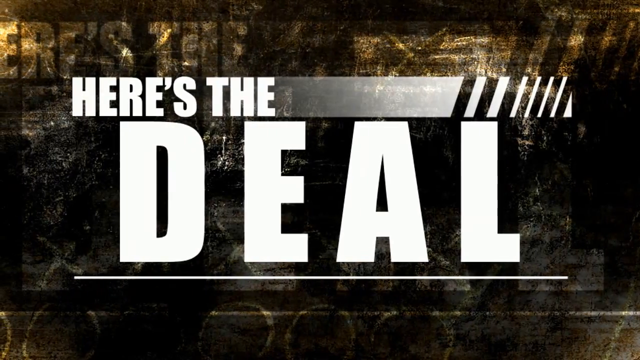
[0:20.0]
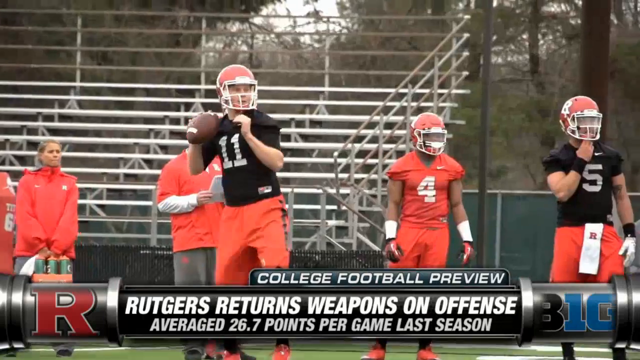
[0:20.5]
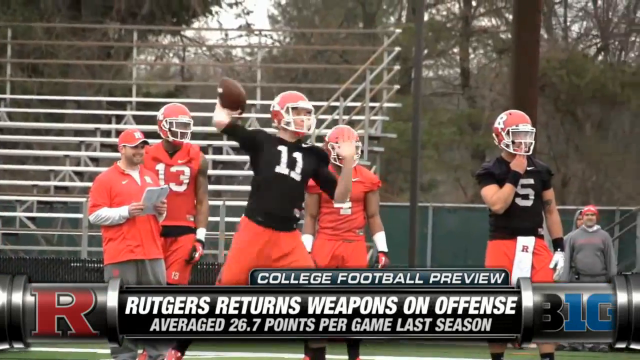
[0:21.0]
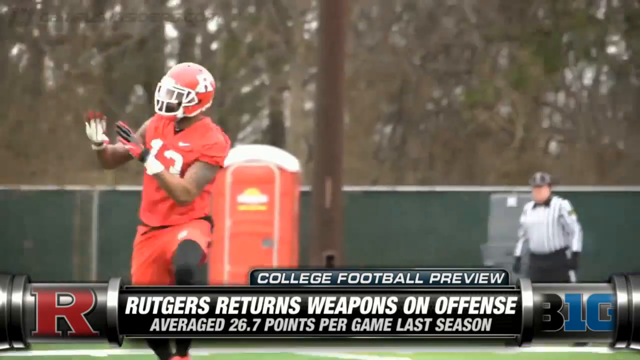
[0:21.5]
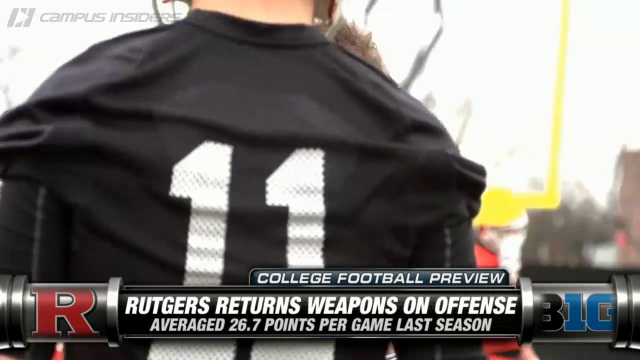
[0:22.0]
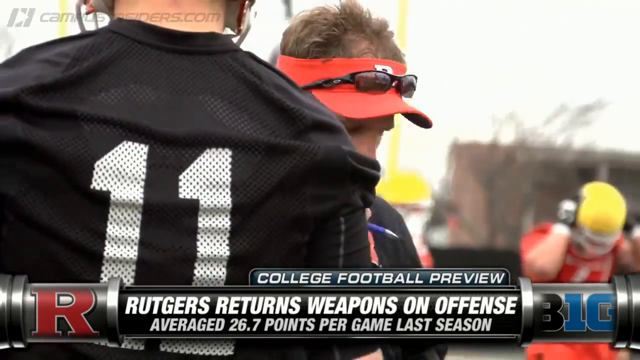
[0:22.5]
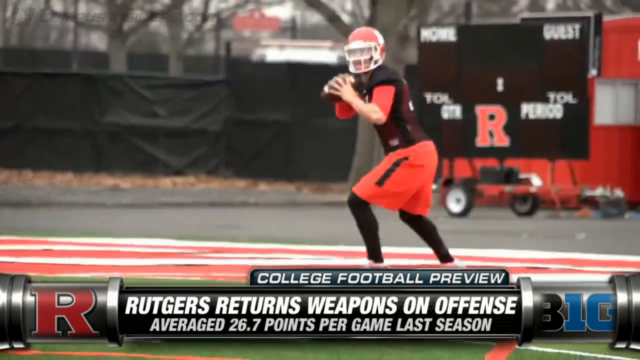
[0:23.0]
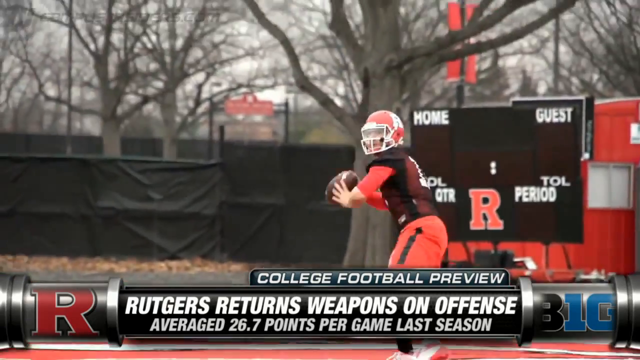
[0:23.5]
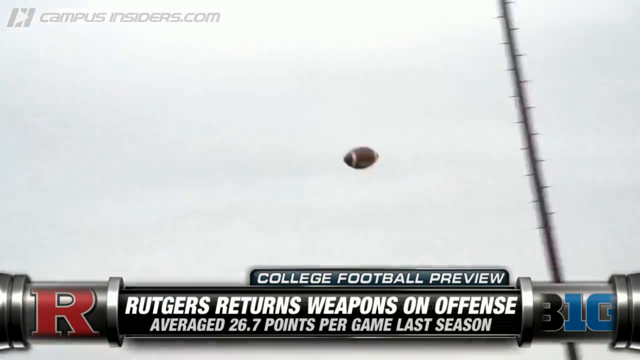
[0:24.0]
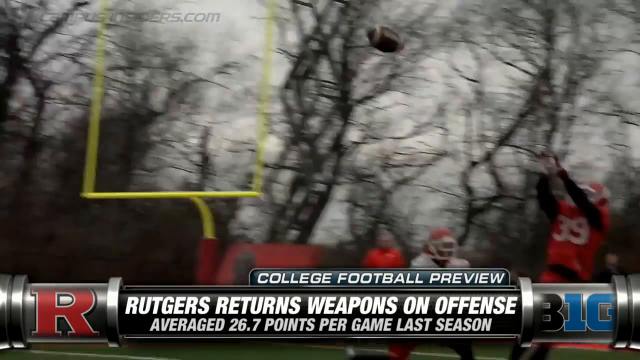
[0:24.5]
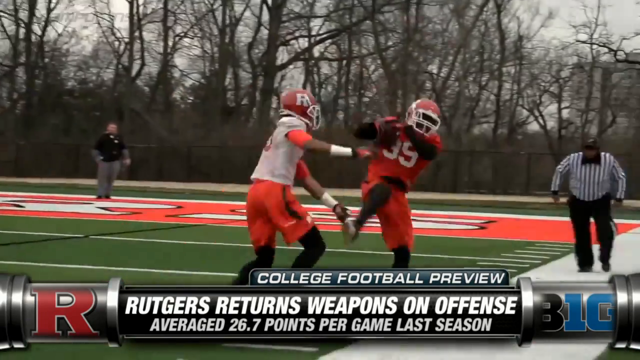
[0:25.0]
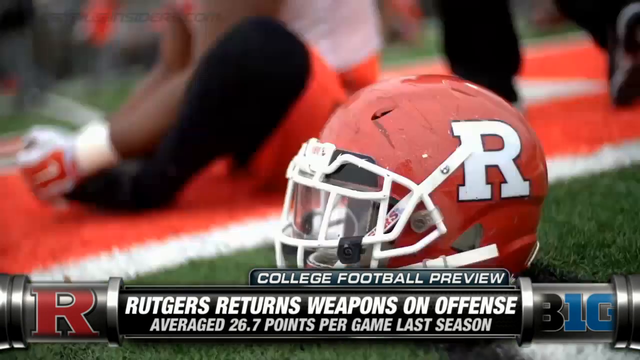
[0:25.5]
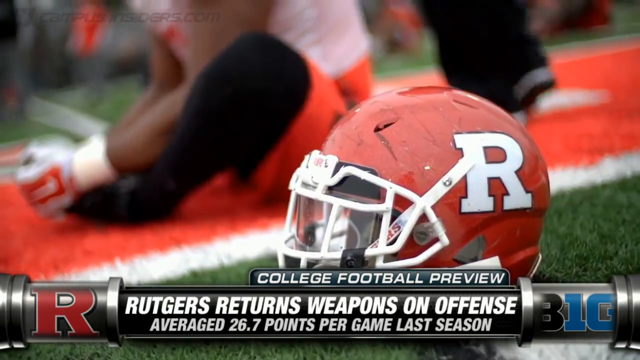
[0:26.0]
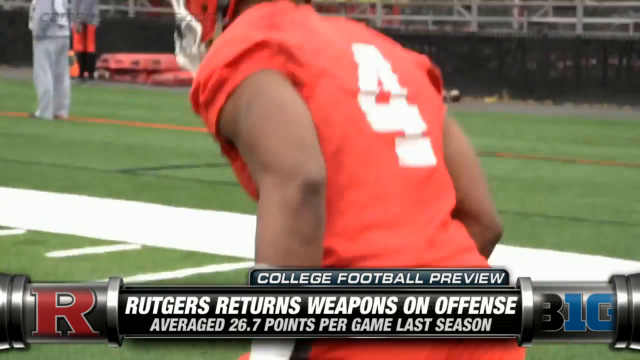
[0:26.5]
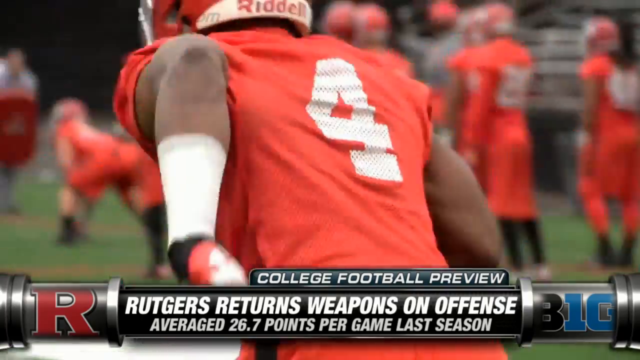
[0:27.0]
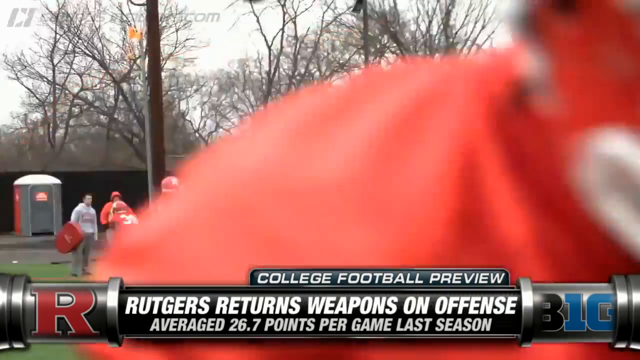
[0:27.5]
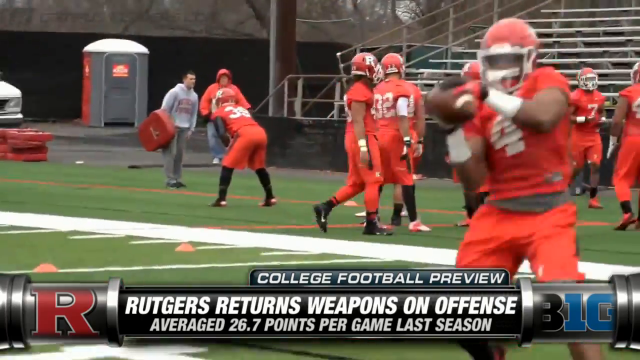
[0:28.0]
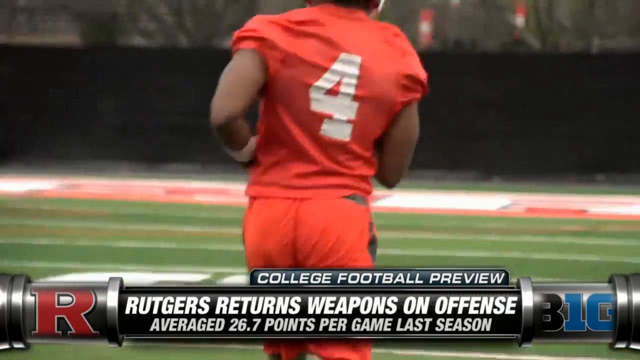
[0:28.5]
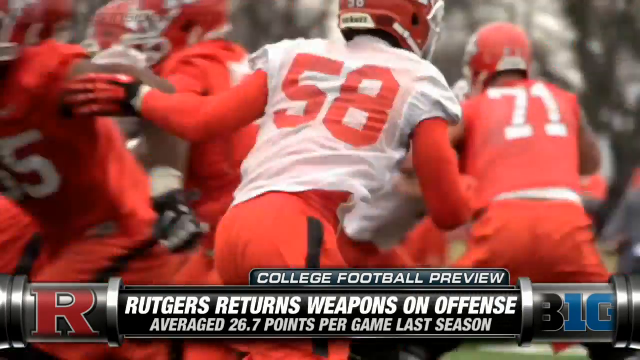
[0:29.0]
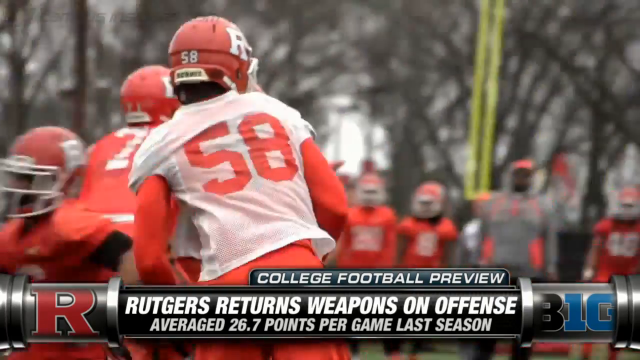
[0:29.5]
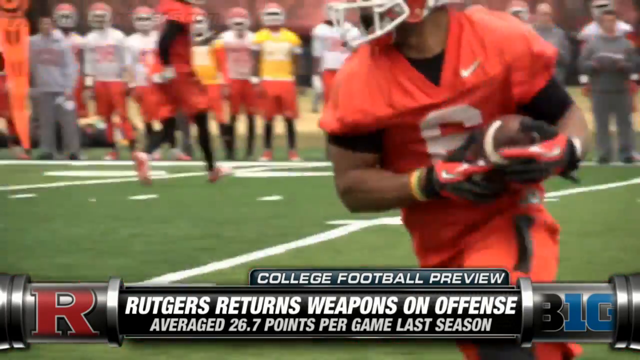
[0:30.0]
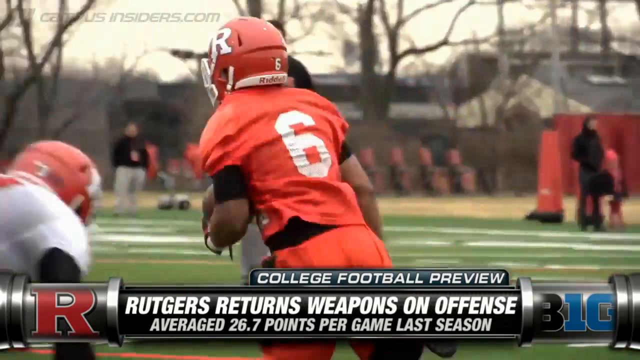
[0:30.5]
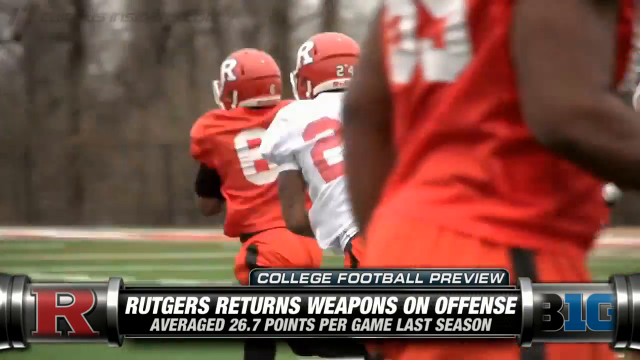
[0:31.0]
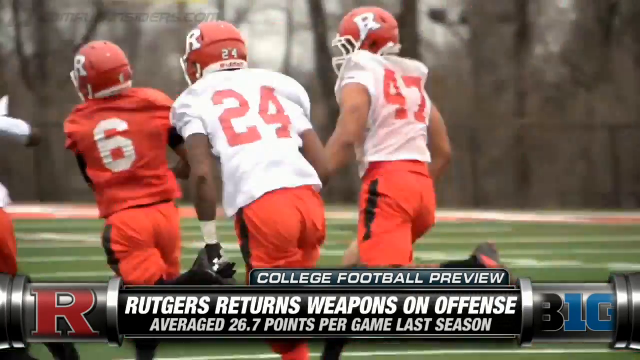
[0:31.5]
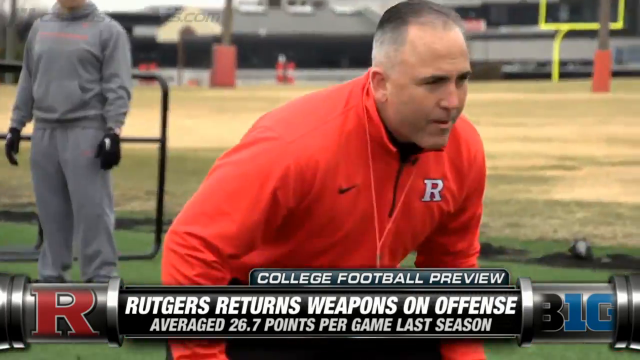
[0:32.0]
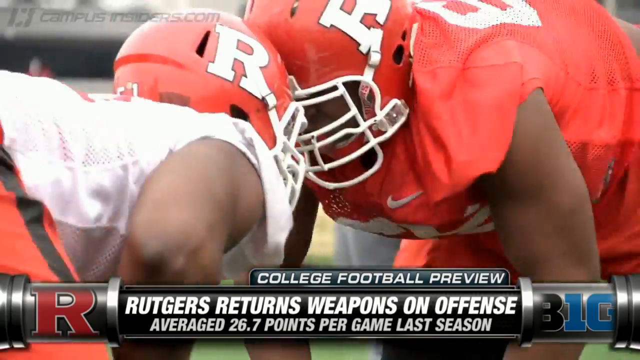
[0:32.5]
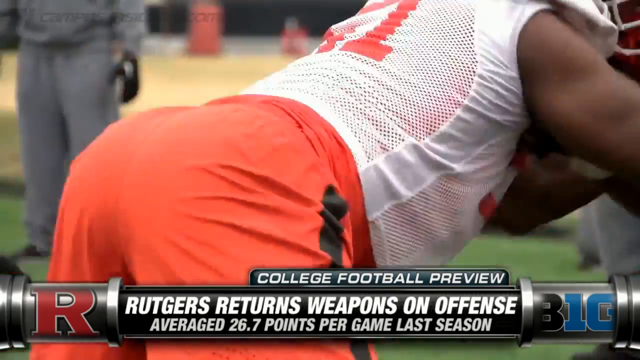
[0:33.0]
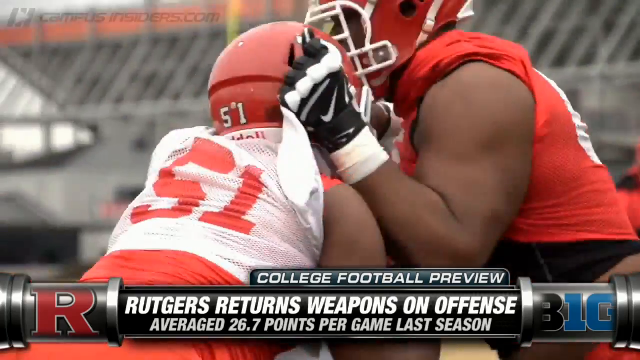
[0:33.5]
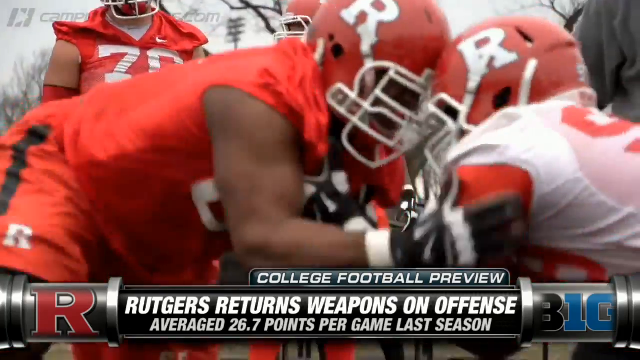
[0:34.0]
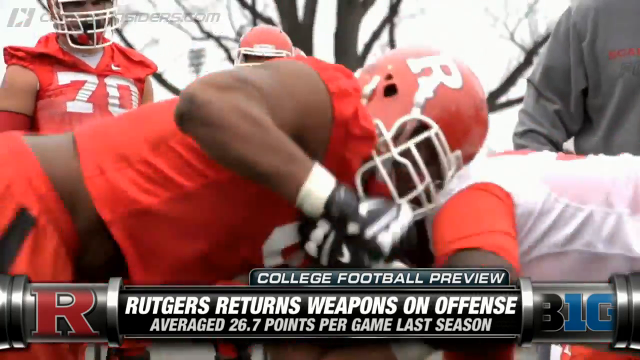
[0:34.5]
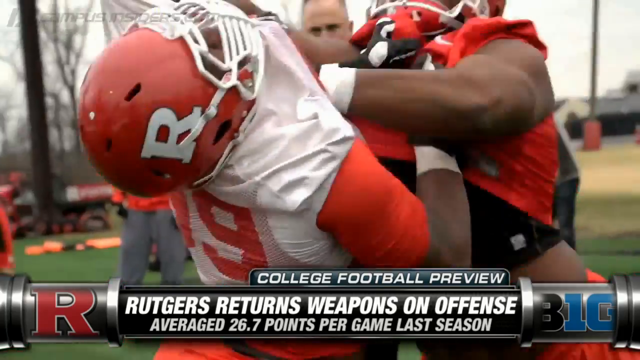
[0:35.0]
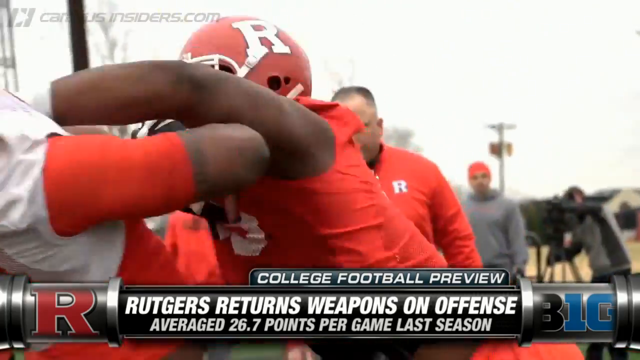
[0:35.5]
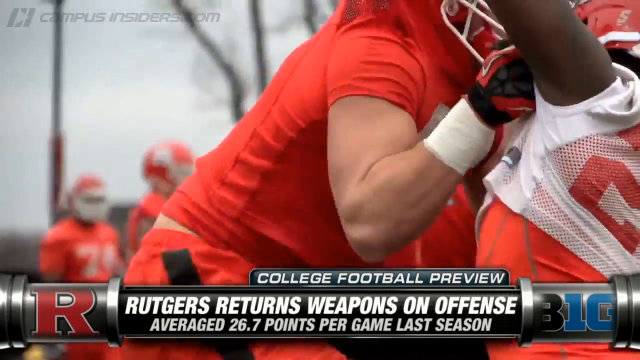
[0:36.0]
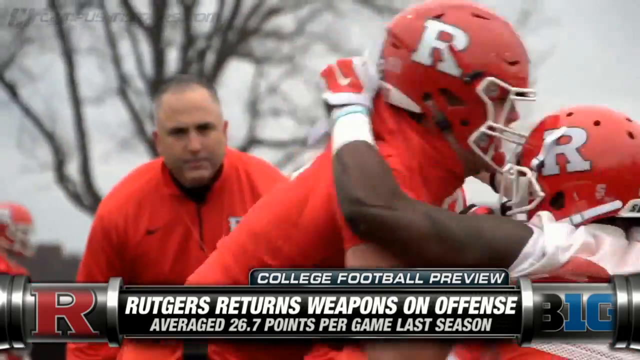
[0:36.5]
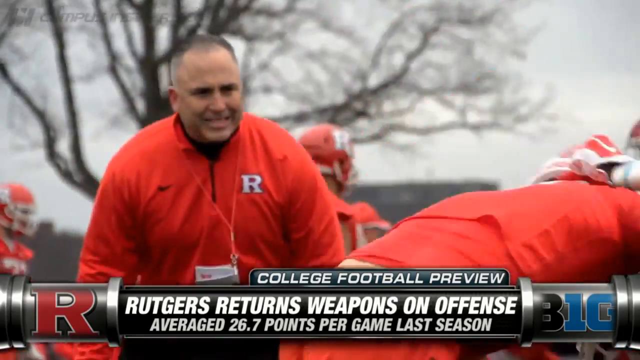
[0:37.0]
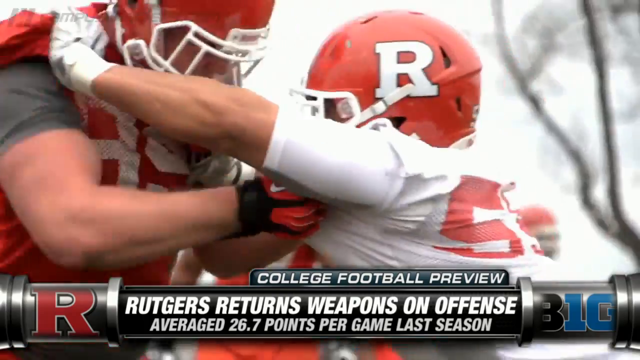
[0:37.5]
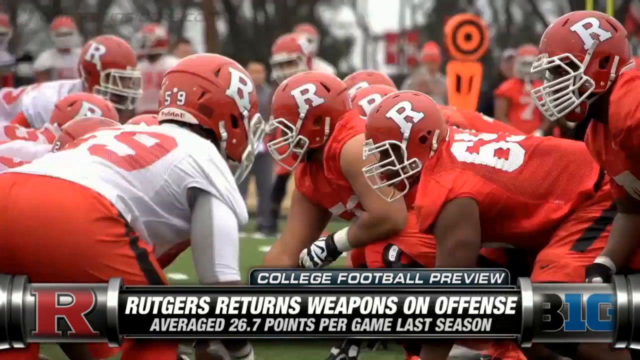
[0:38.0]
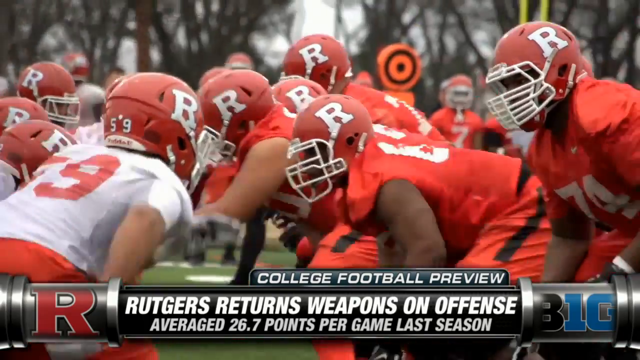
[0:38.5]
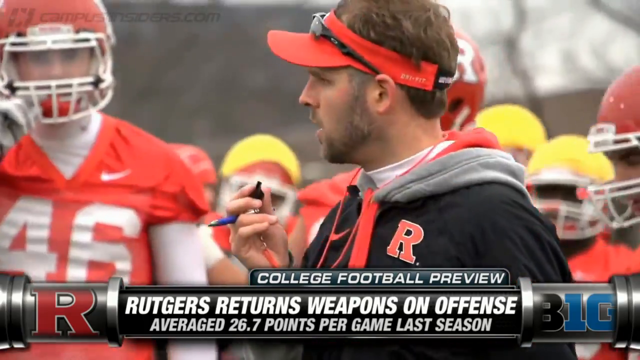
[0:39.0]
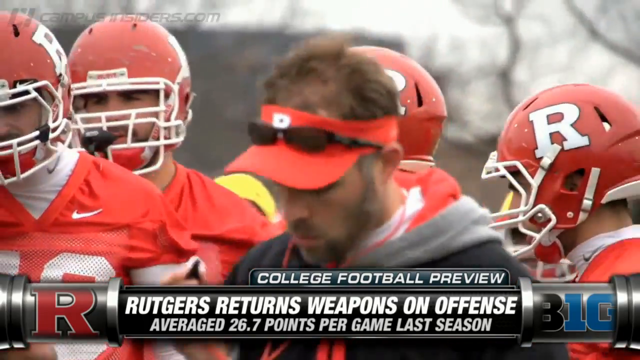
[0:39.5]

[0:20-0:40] The video cuts from the "Here's the deal" graphic to real-world footage of the Rutgers University team at practice. A superimposed graphic running along the whole bottom of the screen reads "College Football Preview. Rutgers returns weapons on offense, averaged 26.7 points per game last season." The quarterback, number 11 in a black jersey, throws a pass to number 13, who wears an all-red Rutgers uniform. A coach wearing a red visor is shown briefly. The quarterback throws another, longer pass to number 39, who is unsuccessfully defended by a Rutgers practice player in a white jersey. A close-up perspective shot shows a Rutgers football helmet on the field with a blurry Rutgers player stretching in the background. The camera focuses on Rutgers number four running drills, as well as number six. Next is a deep-focus shot of a coach with a short buzz cut and very short grayish hair on the sides, wearing a long-sleeve Nike Rutgers sweatshirt with a red whistle rope hanging from his neck. Linemen aggressively push into each other during drills. A couple more shots of the coaches follow: first the coach with the visor, then the coach with the buzz cut, now holding a megaphone.